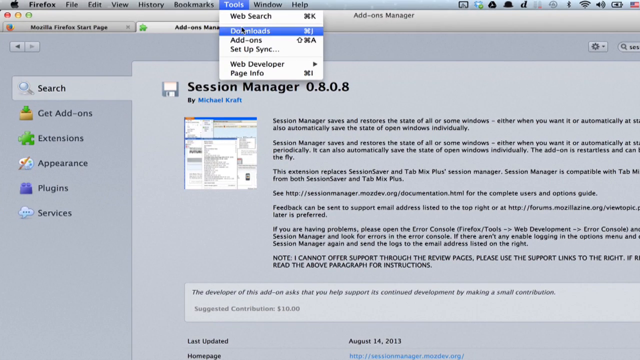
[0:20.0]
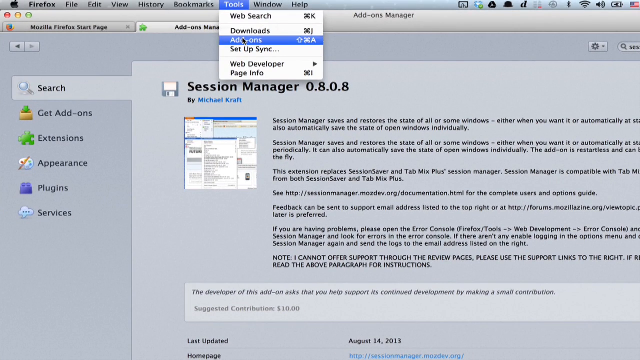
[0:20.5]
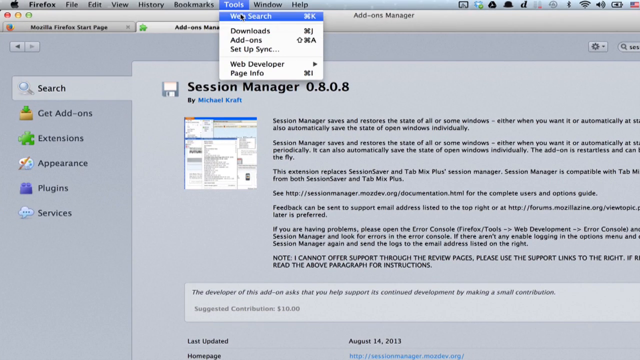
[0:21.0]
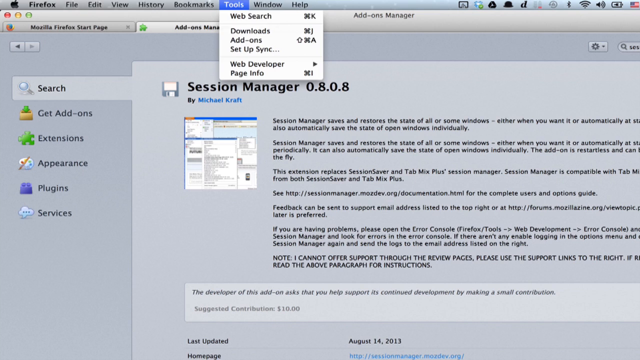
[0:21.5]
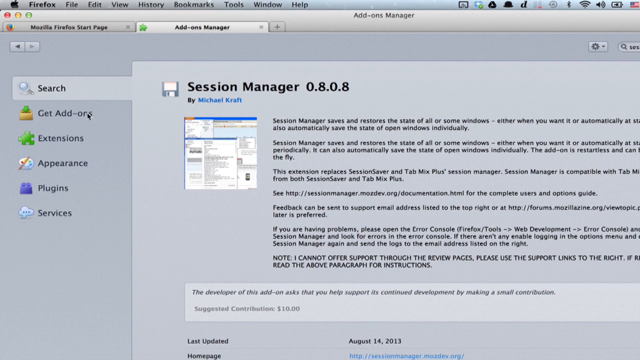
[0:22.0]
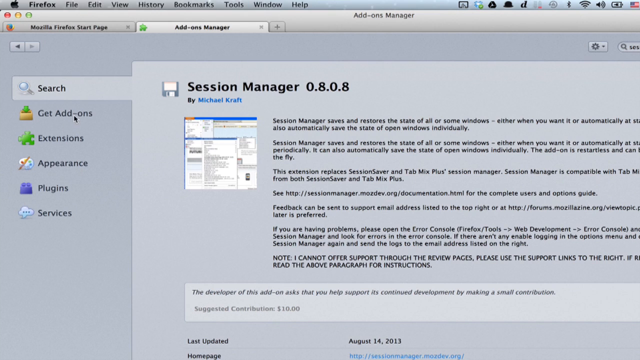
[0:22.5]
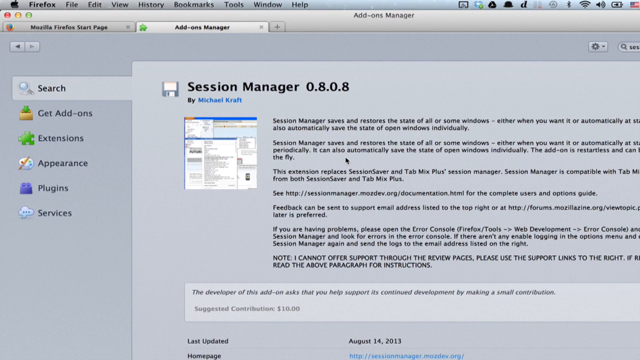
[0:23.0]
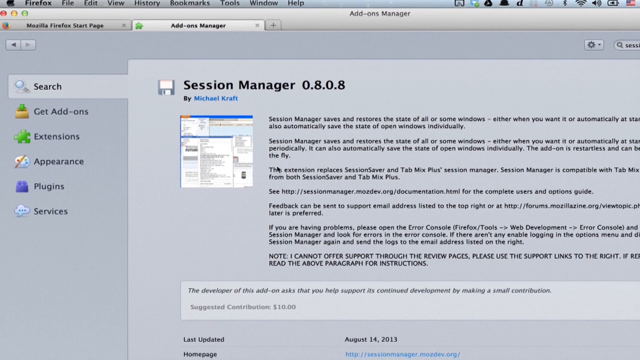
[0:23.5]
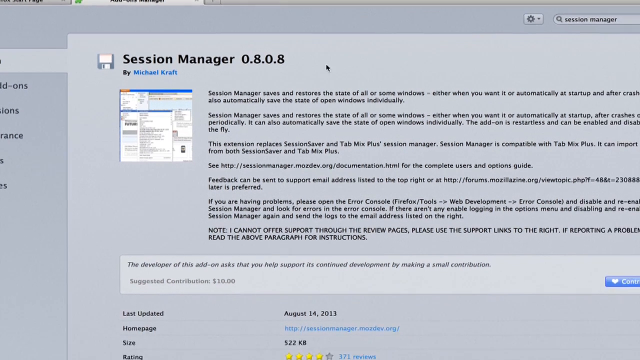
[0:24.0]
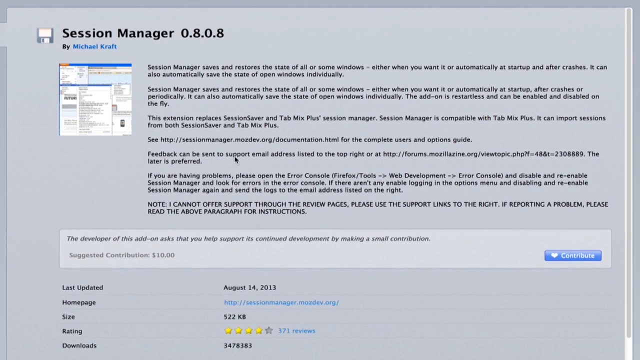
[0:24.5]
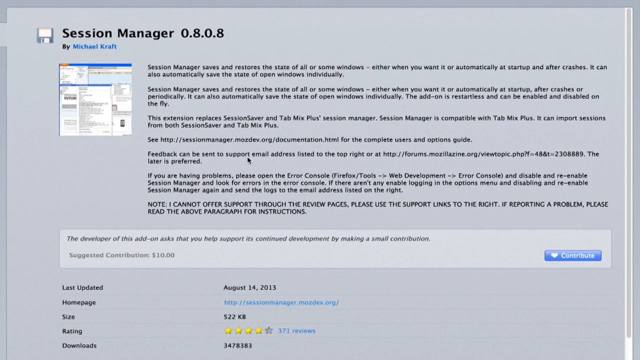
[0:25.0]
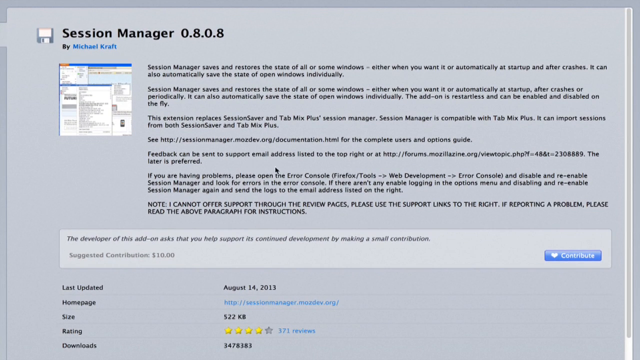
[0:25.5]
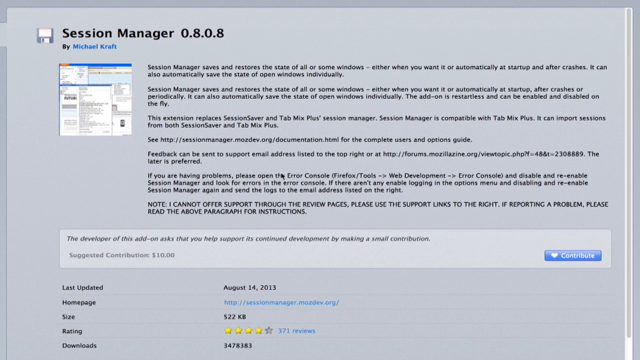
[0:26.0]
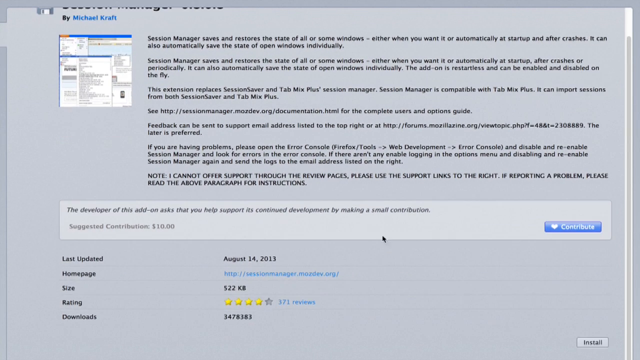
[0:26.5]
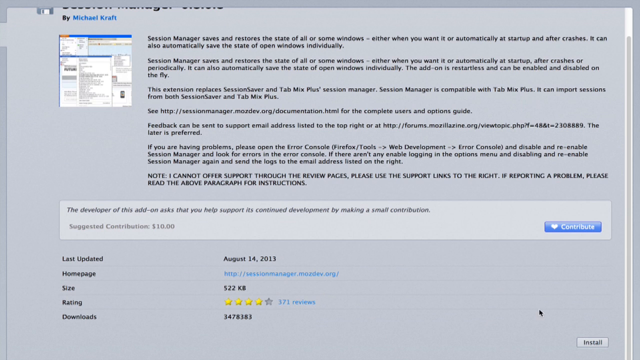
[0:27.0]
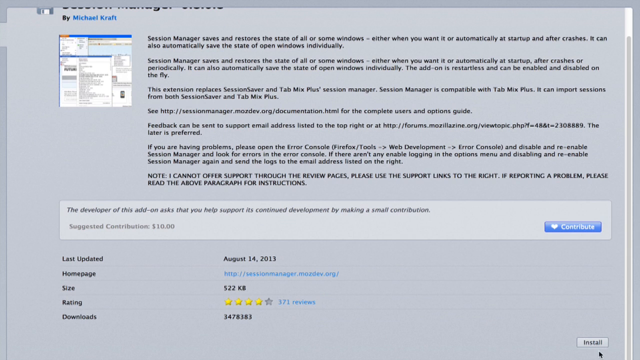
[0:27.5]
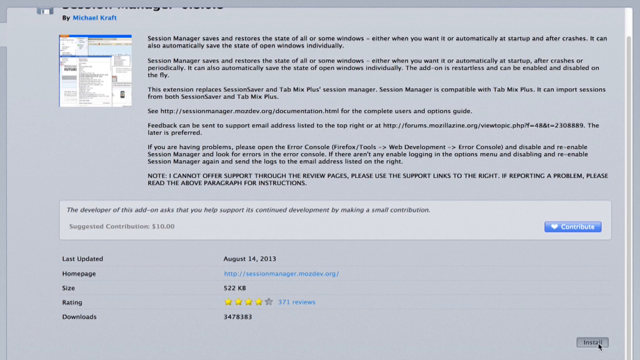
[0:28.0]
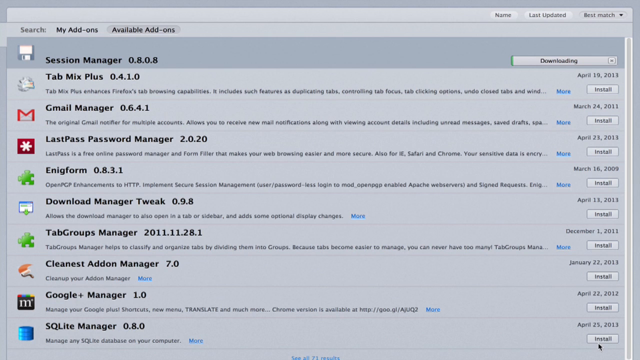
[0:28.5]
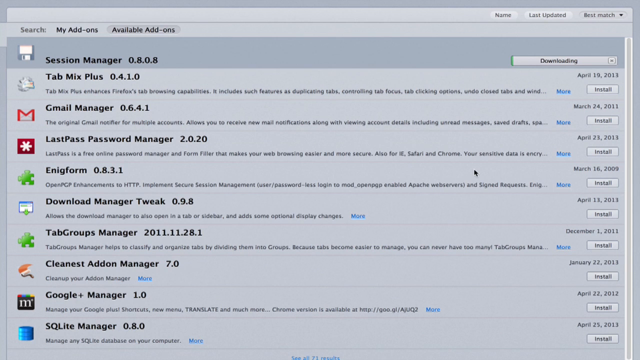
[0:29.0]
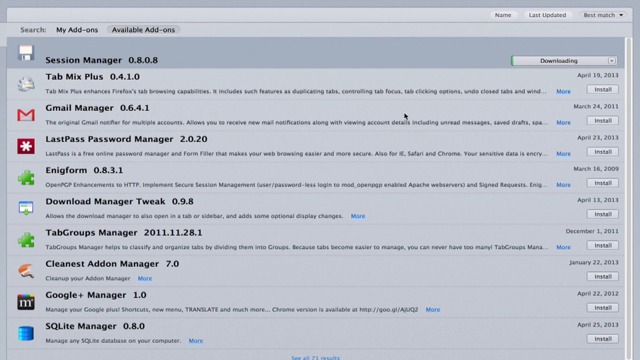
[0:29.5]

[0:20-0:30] In the Mozilla Firefox options, the user goes to the top navigation bar, clicks the Tools drop-down, and clicks out of it. The screen recording then pans over to the zoomed-in session manager page, and the user scrolls to the bottom right, where there is an install button. Clicking install brings up the add-ons downloads page, which lists older downloads; the most recent one at the top is session manager 0.8.0.8, currently downloading with a green progress bar.